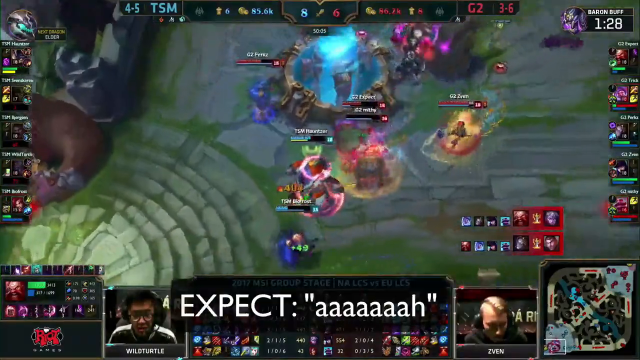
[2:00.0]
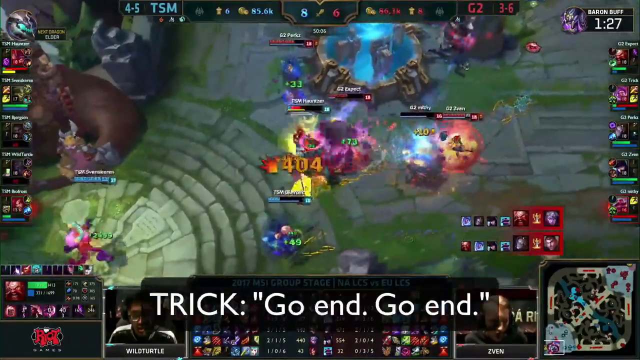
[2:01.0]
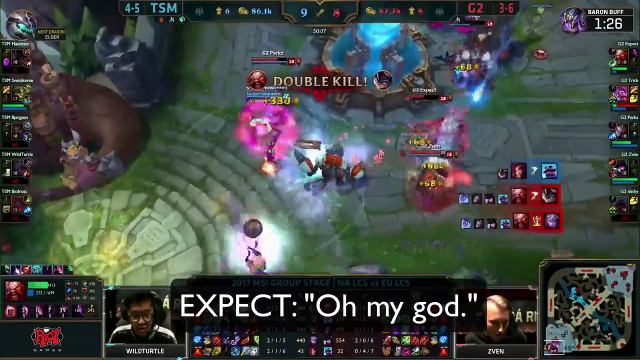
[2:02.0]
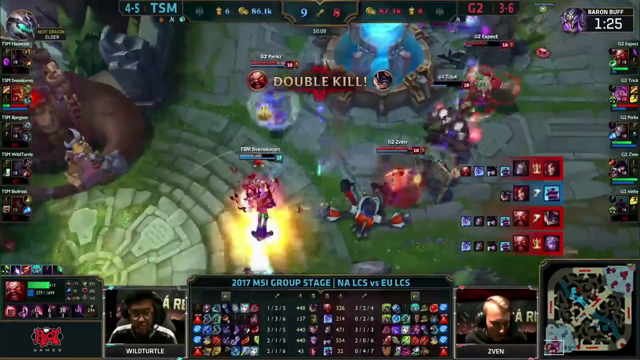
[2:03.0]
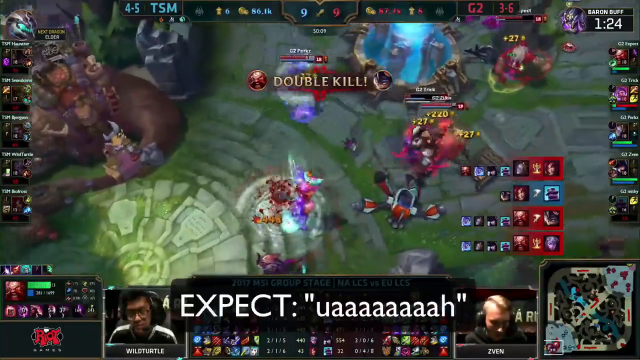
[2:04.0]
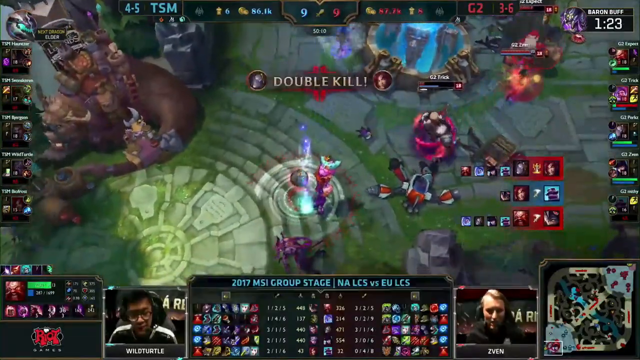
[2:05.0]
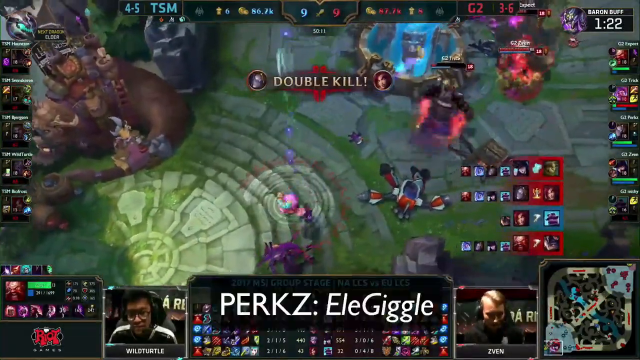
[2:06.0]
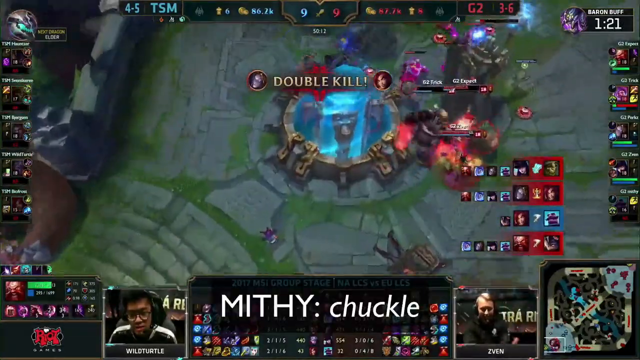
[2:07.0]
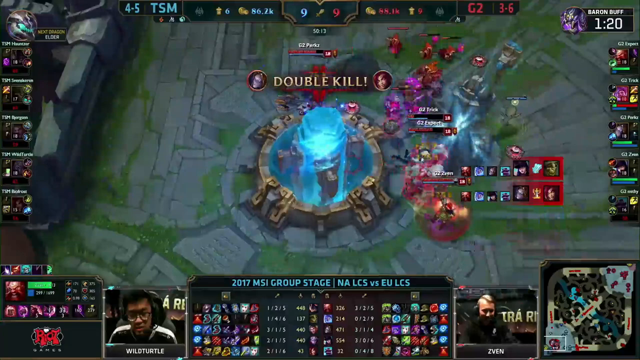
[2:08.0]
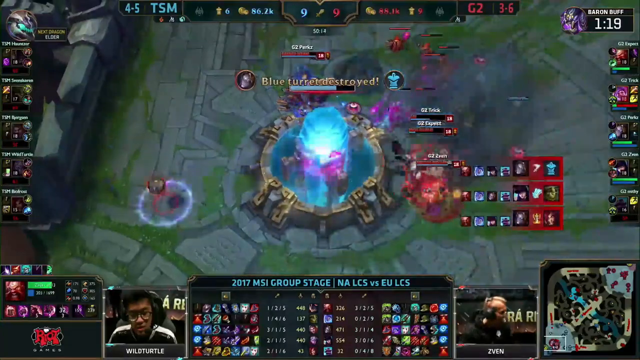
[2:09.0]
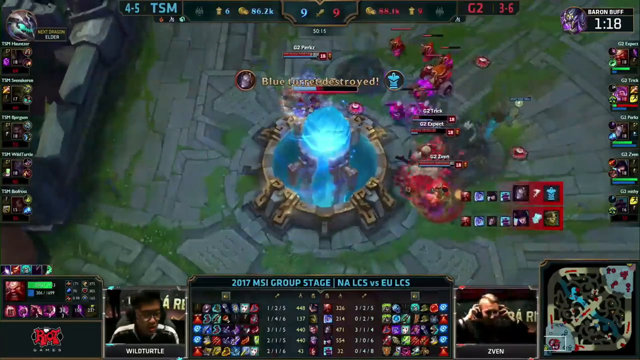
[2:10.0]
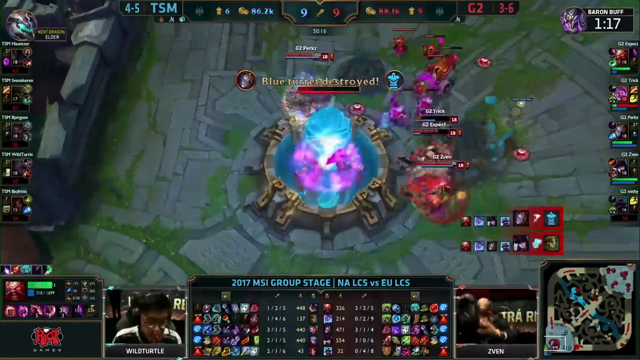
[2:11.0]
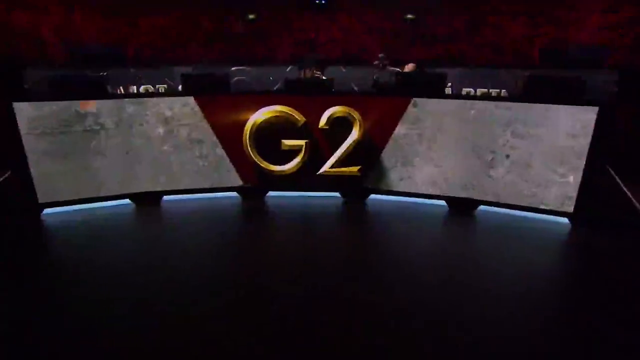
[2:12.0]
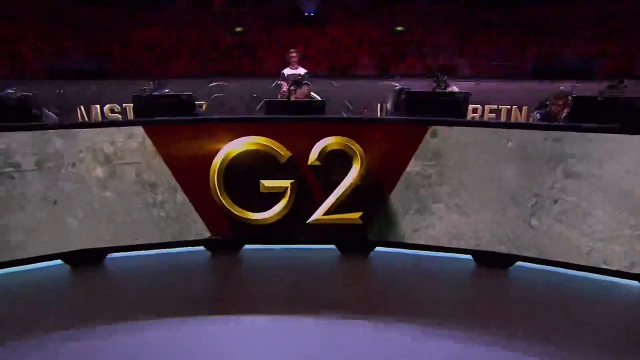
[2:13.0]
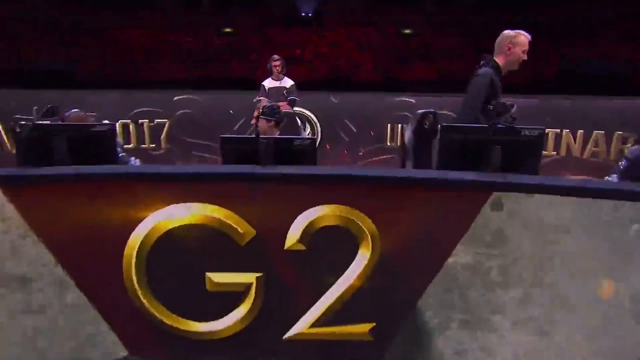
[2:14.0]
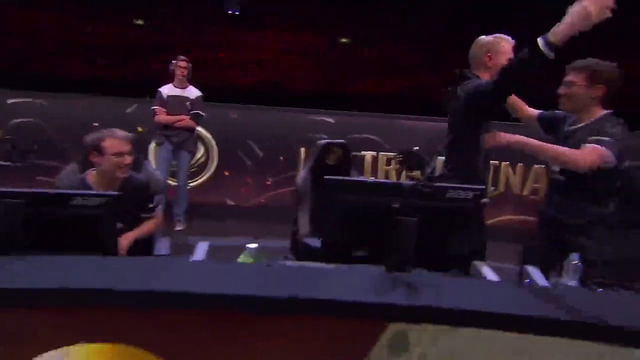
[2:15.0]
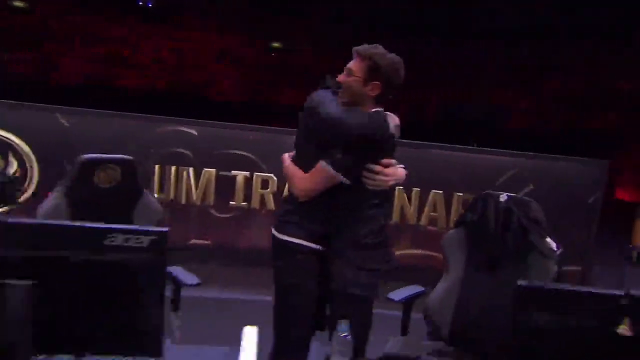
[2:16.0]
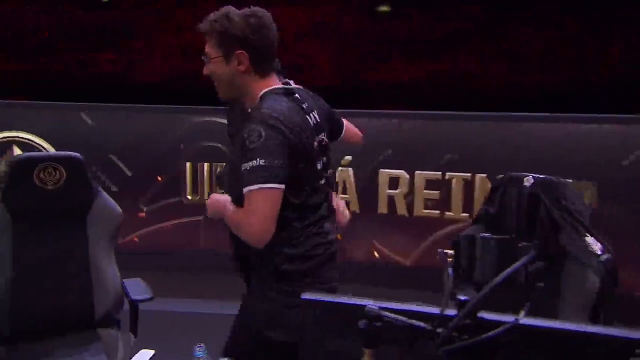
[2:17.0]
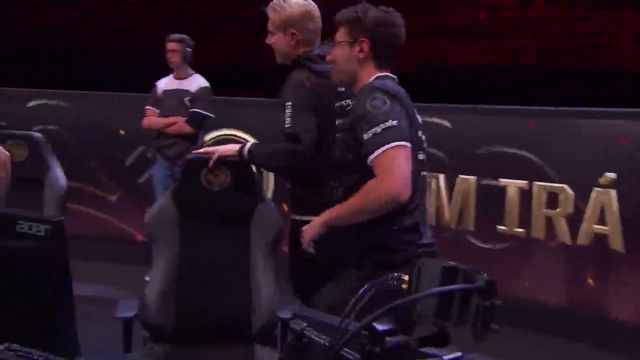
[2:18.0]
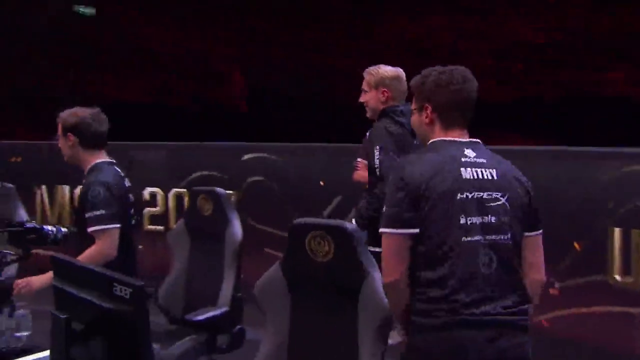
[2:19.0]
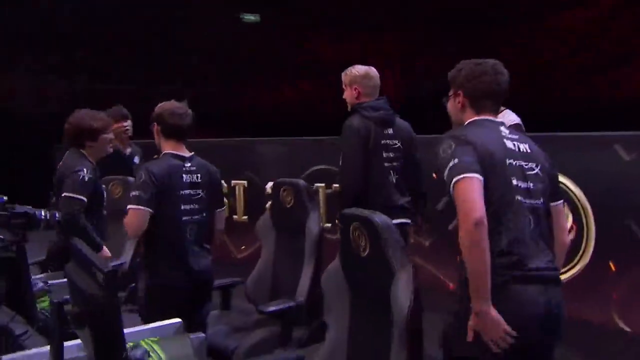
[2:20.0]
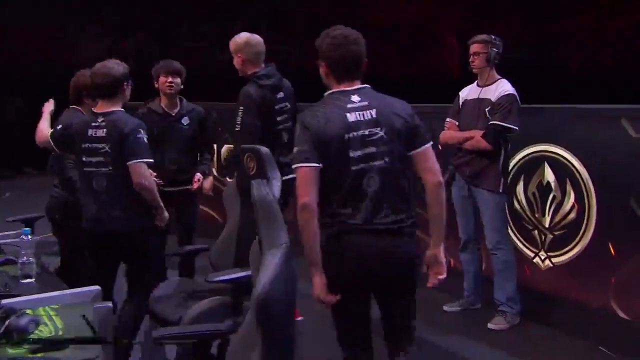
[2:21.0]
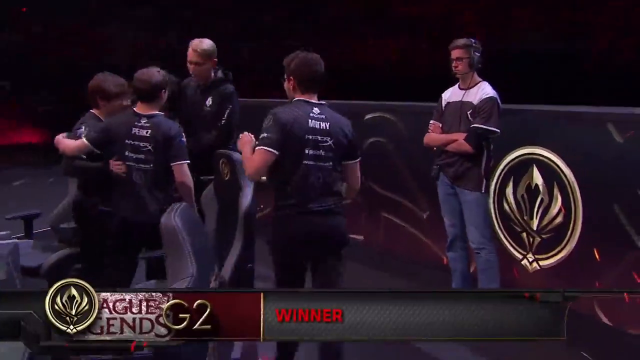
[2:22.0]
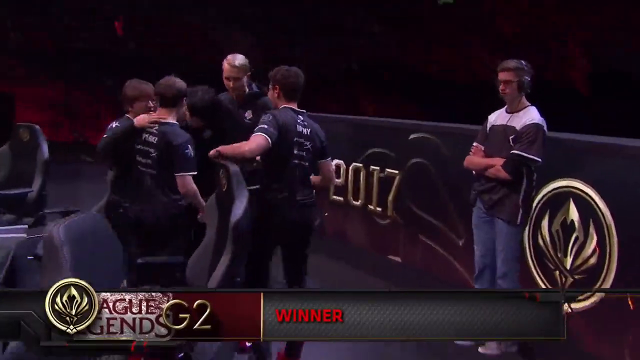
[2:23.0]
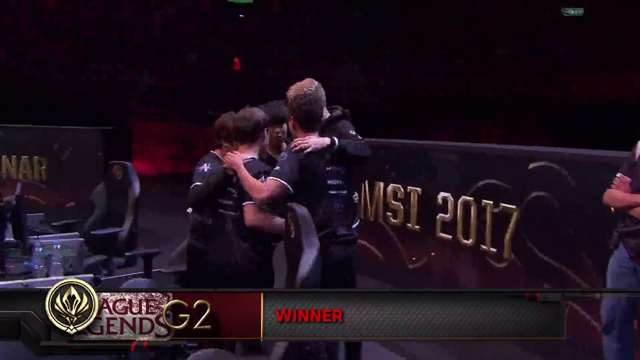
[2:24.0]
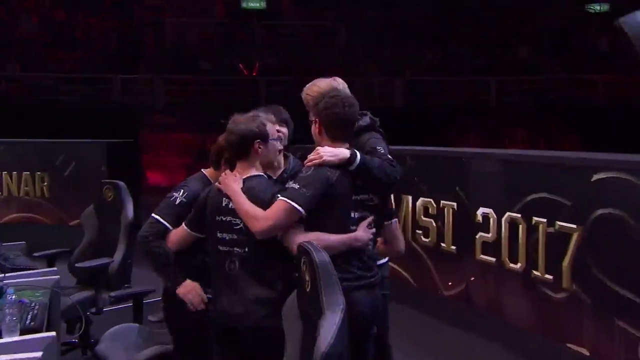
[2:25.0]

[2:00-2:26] The battle in the south continues, and "double kill" pops up on the screen twice, in gold text with red triangles above and below it. It looks like the end of the match, as the video suddenly cuts from the League of Legends gameplay to a real-life esports arena. A group of men in black esports jerseys suddenly get up from high-end PCs and desks and start hugging each other. There are five people in total, all Asian men except one blonde man who appears to be white. "g2" appears in big gold text on the barrier at the desks they were sitting behind, with the PCs behind it. The white man with blonde hair, an older man who might be their coach, is the first to stand up, and he comes out to hug his players, young Asian men in their 20s or 30s. They all share a big group hug.